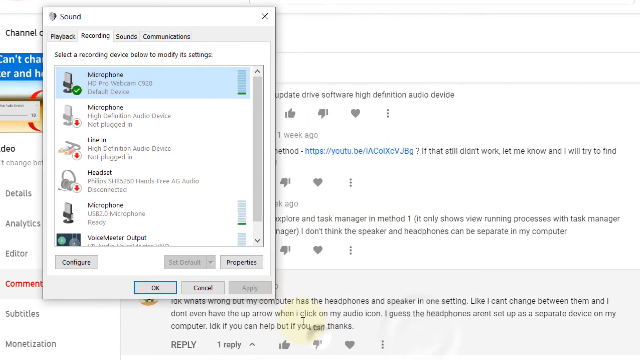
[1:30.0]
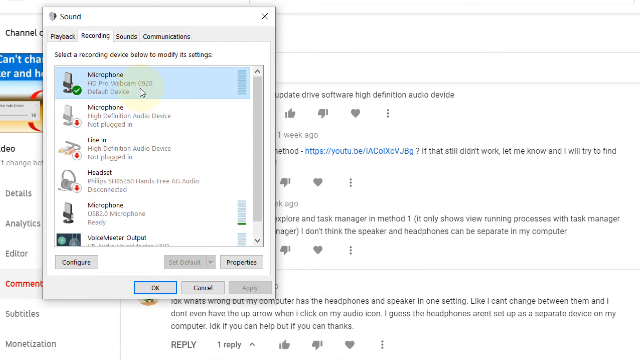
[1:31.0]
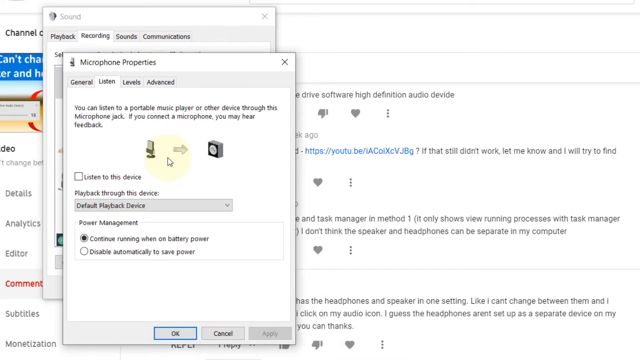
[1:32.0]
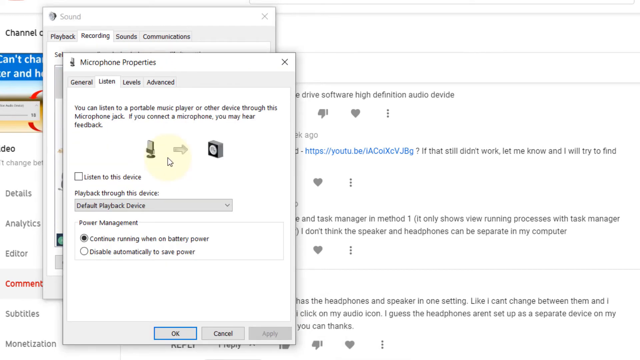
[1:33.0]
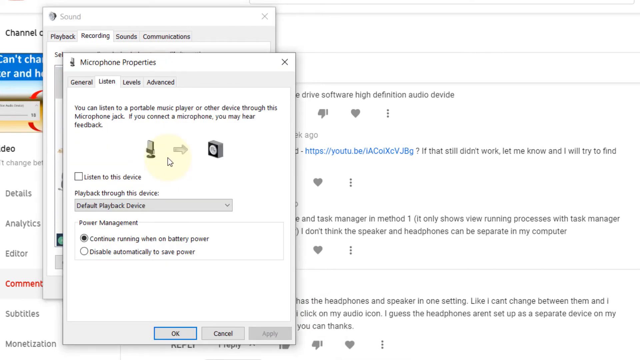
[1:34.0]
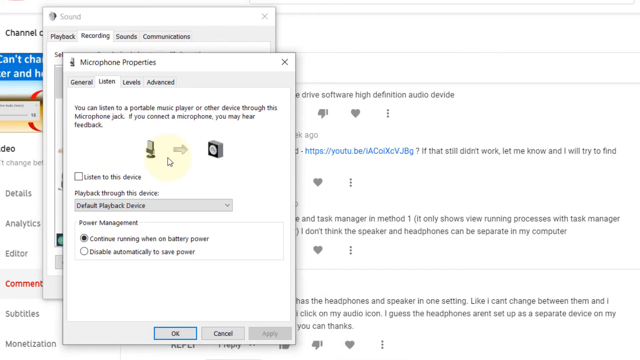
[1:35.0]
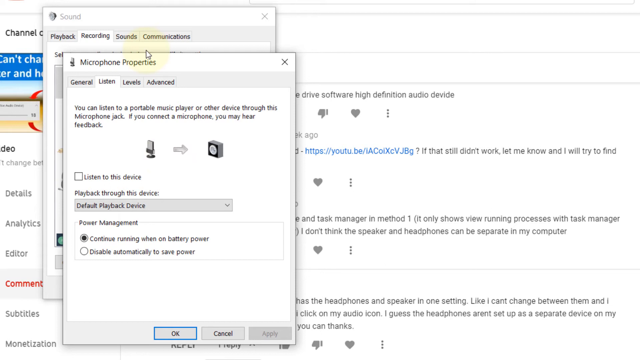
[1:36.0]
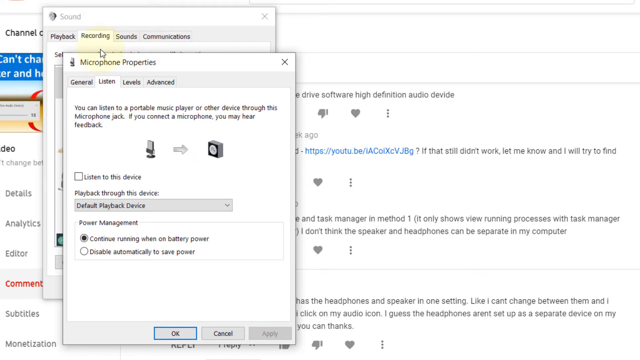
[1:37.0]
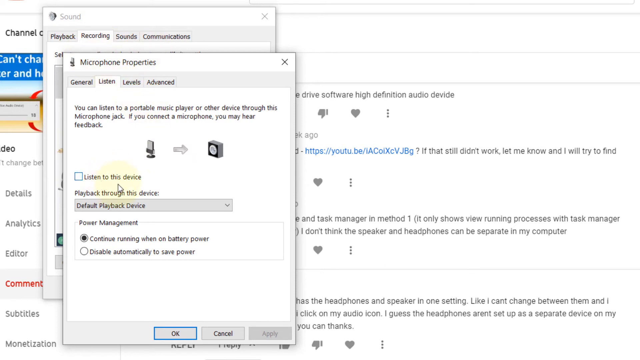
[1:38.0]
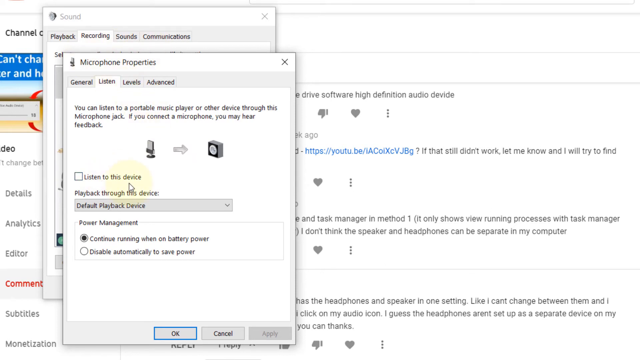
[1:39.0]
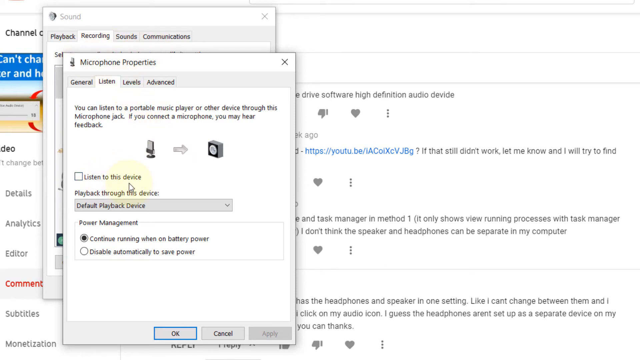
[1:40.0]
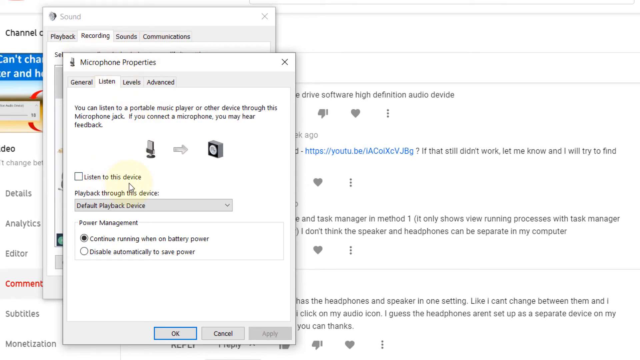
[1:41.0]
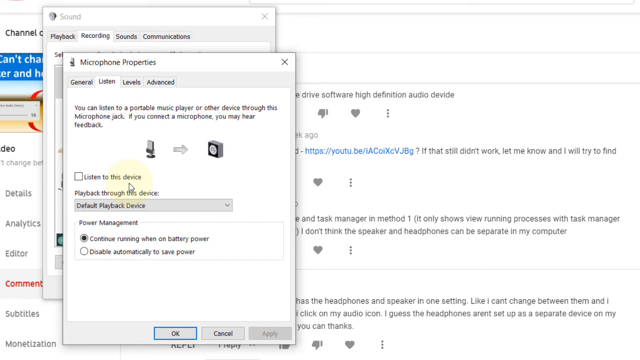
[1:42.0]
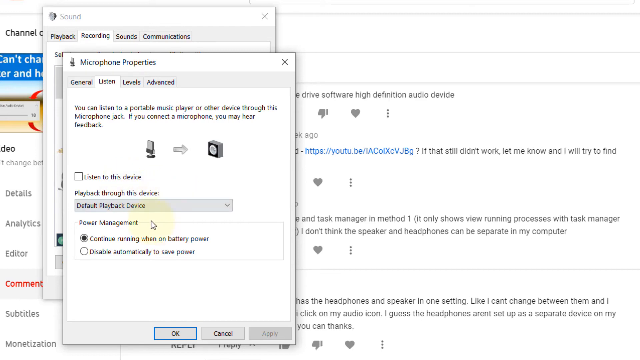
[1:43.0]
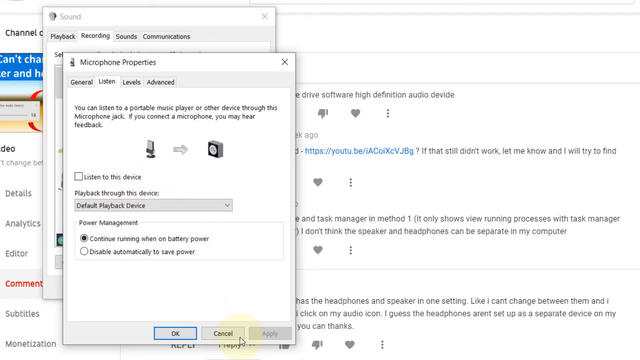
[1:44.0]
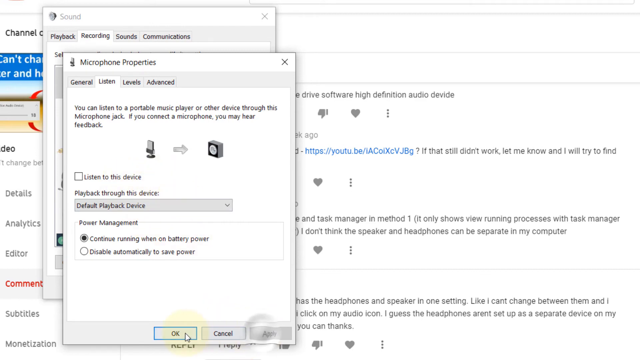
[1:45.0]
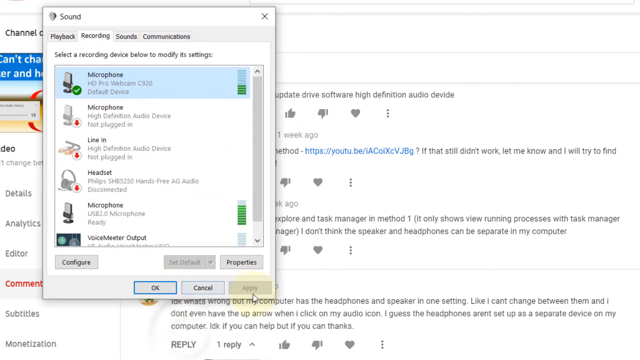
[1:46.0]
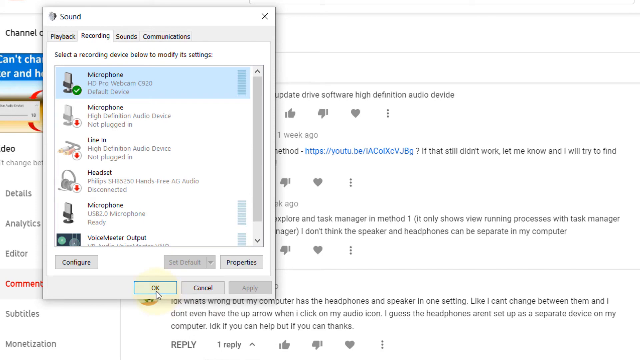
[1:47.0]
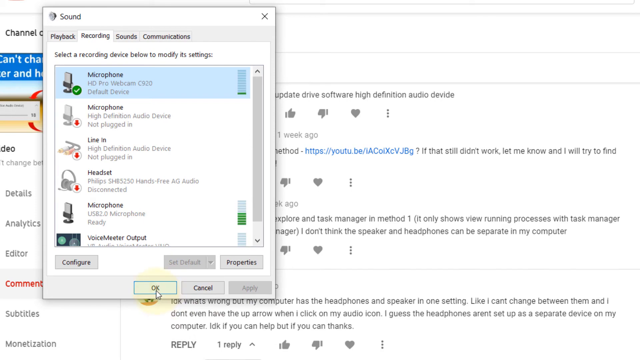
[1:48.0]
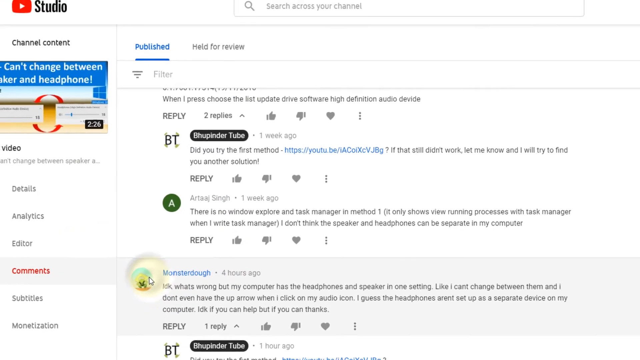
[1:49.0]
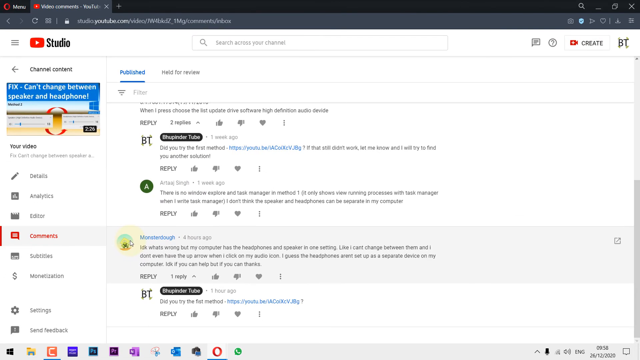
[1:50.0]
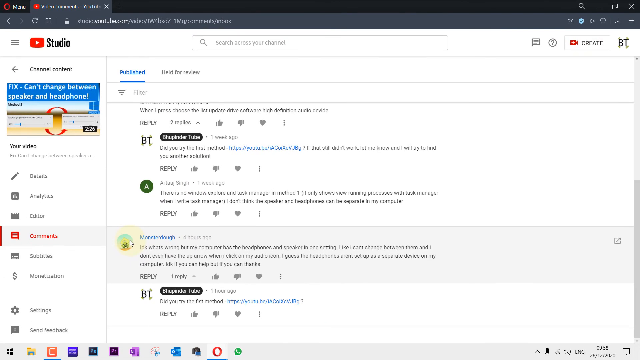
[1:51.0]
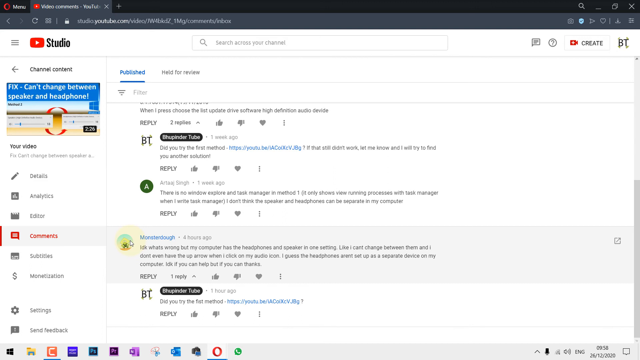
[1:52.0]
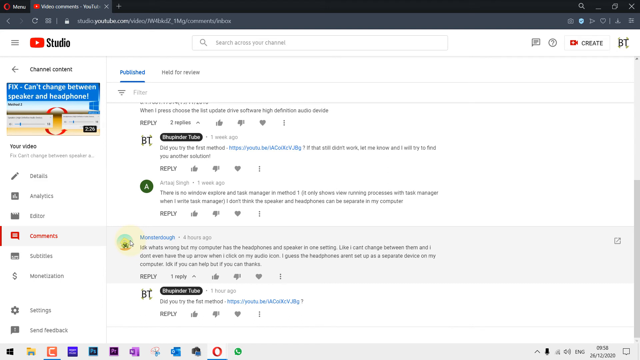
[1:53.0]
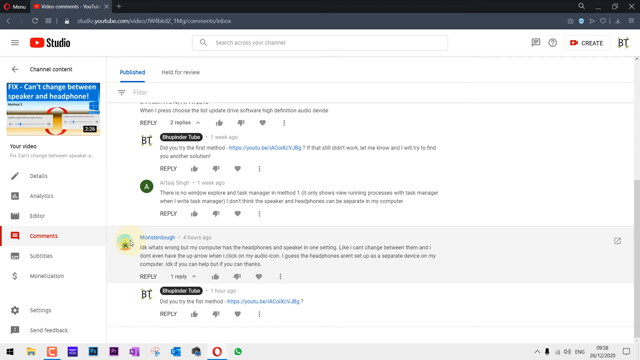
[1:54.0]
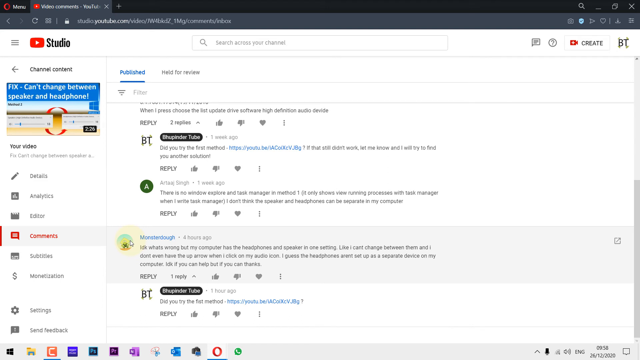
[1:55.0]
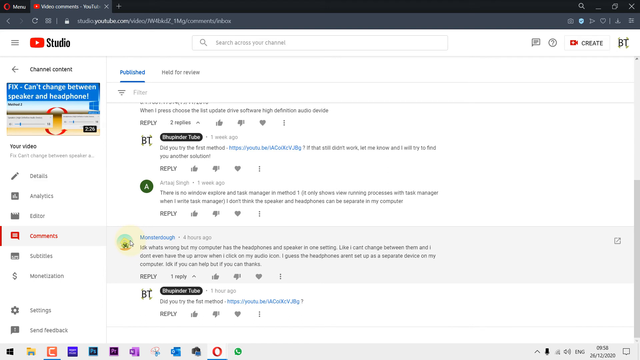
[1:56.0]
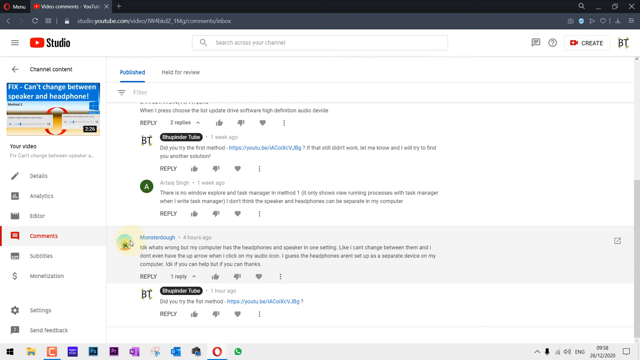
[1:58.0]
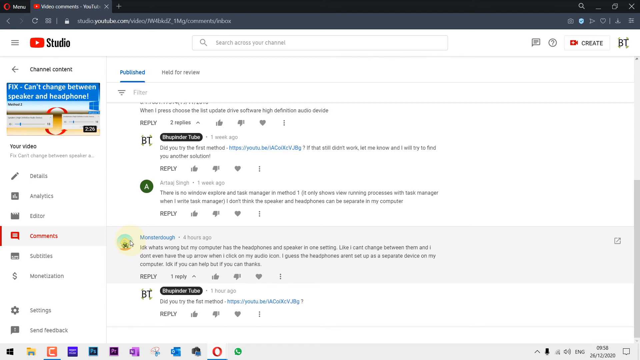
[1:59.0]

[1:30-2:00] The Sound window, titled "Sound" in its top left corner, is on top of the conversation behind it. The arrow seems to click on different options, including microphone, and moves around its settings such as "listen to this device", under which there are about four options. It then clicks out of the Sound window, and the view zooms out to the center page, which has a YouTube logo with "studio" written on it. The page is full of comments from different people. On the left side are options such as analytics, editor and comments, with "comments" highlighted in red to show it is the current page. The page reads "published", and under it "filter", with comments written in black on a white background. Thumbs up, thumbs down and heart icons are also present.